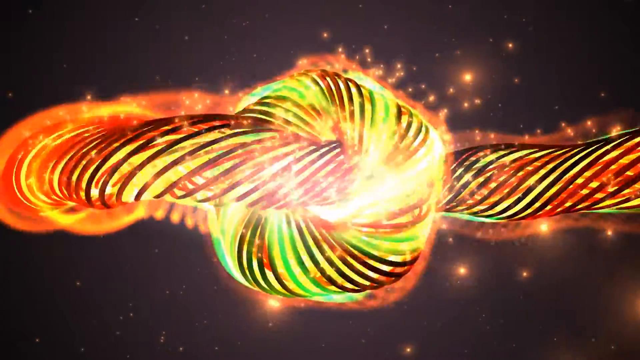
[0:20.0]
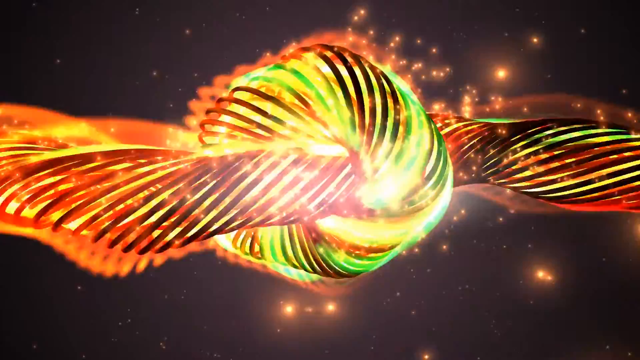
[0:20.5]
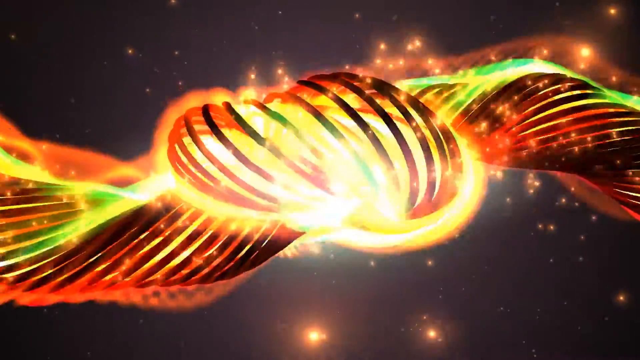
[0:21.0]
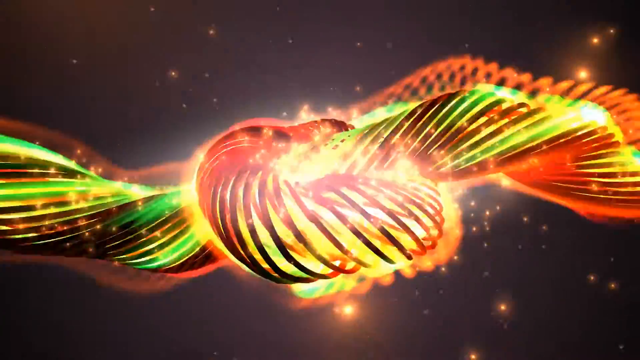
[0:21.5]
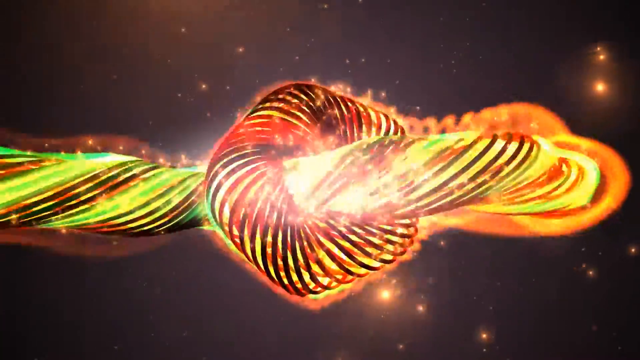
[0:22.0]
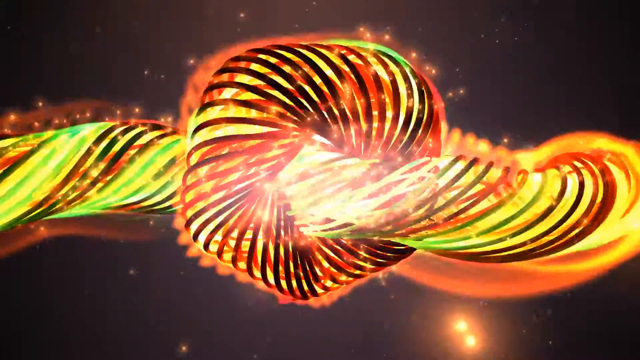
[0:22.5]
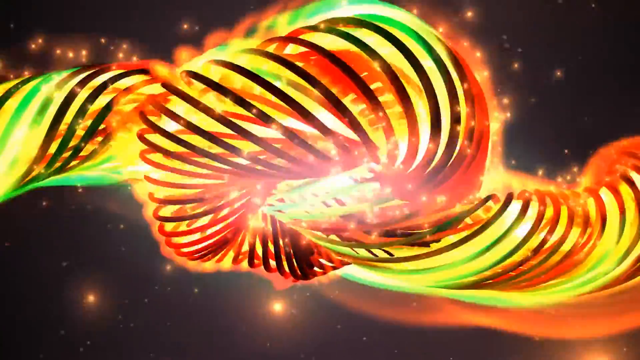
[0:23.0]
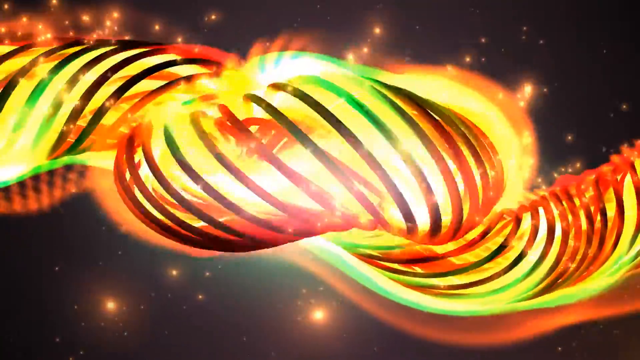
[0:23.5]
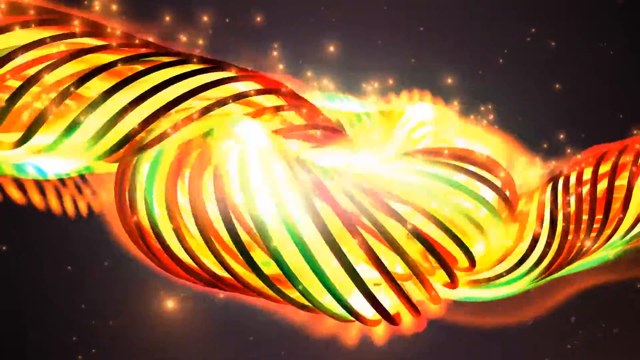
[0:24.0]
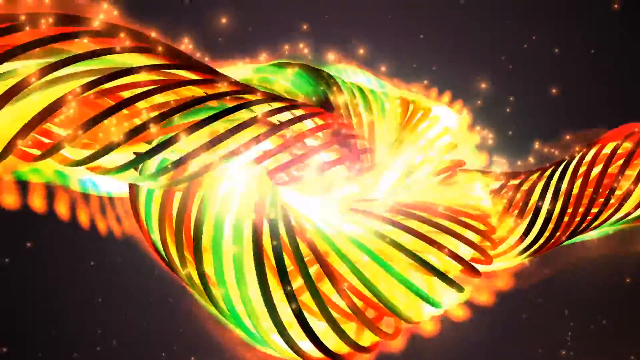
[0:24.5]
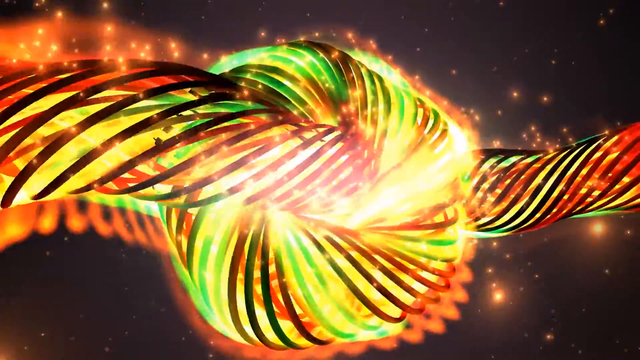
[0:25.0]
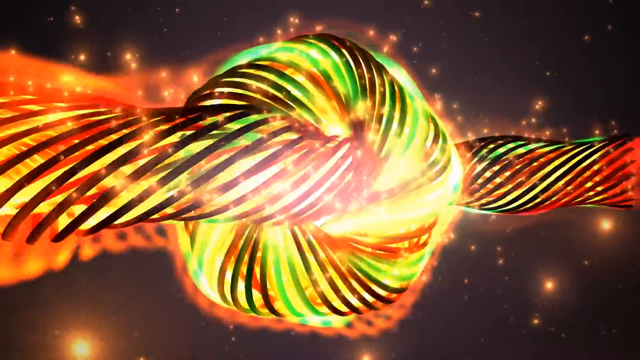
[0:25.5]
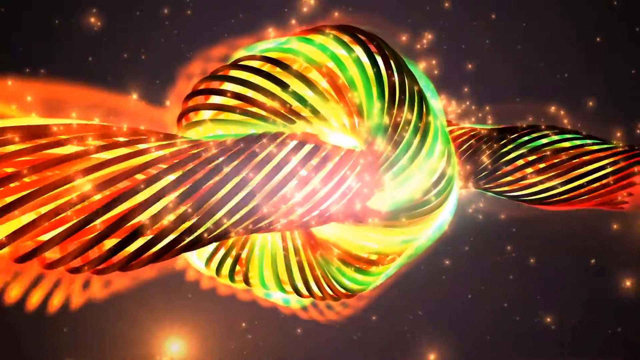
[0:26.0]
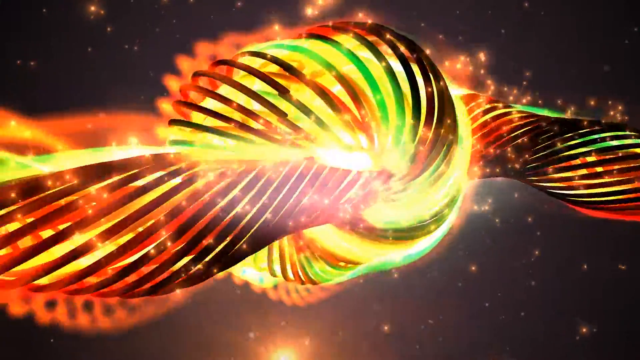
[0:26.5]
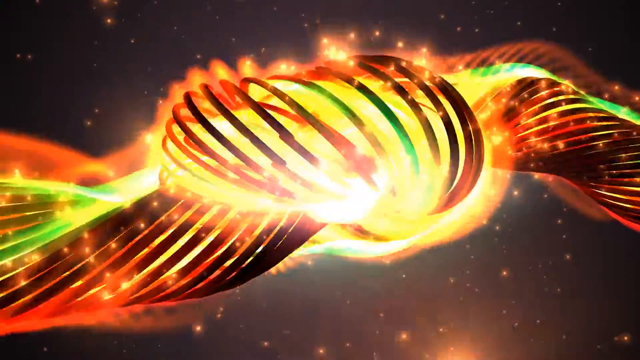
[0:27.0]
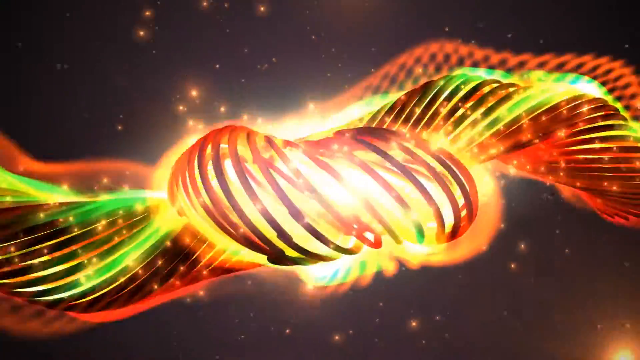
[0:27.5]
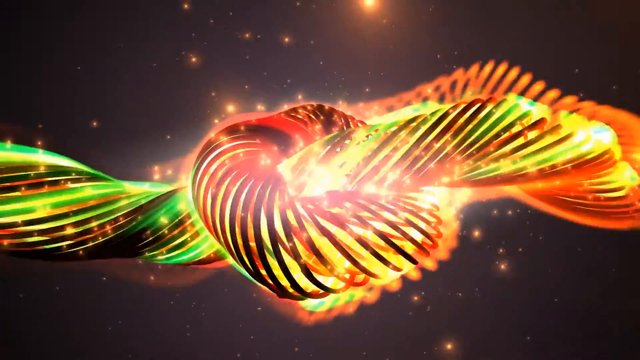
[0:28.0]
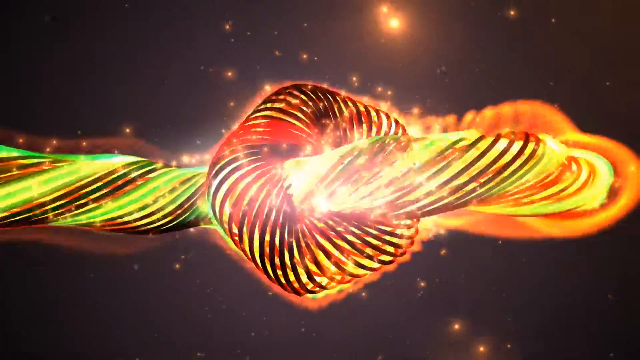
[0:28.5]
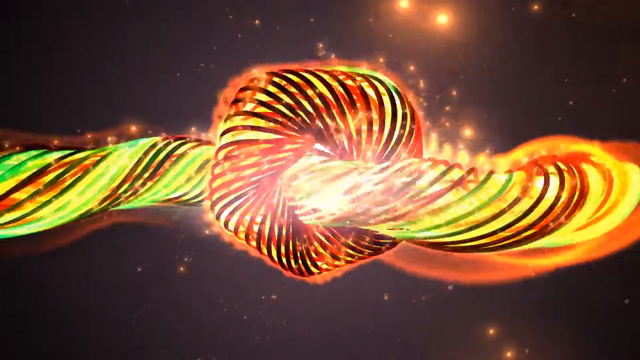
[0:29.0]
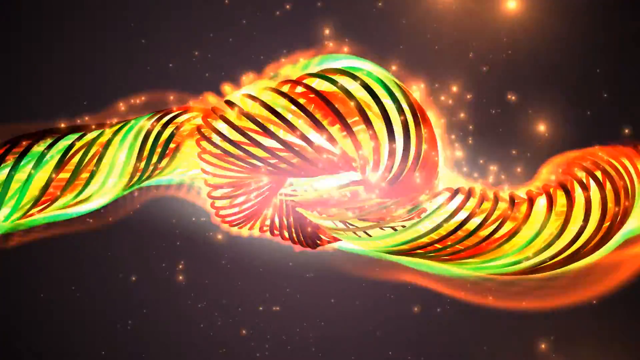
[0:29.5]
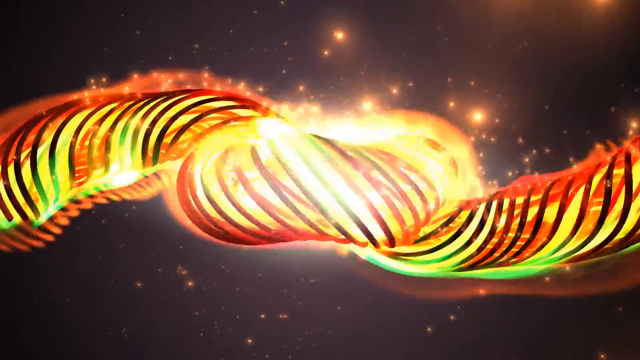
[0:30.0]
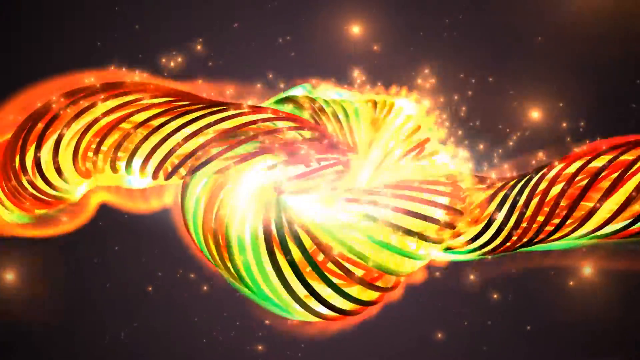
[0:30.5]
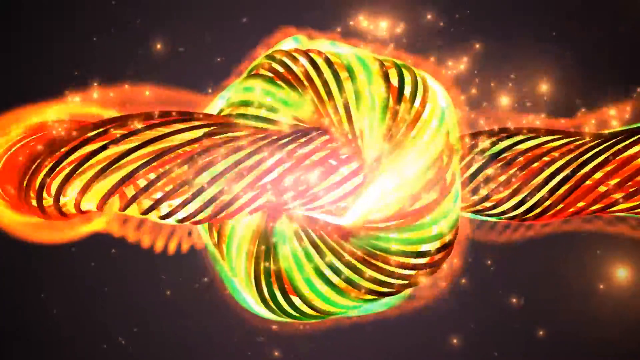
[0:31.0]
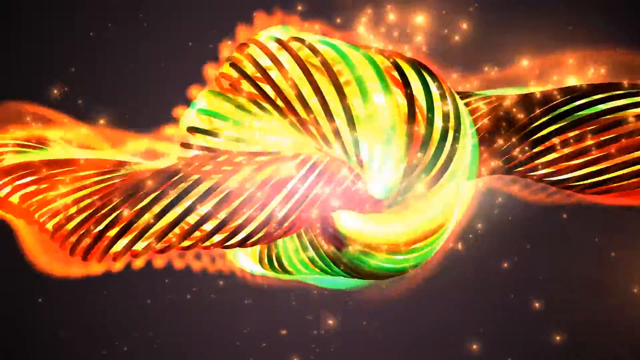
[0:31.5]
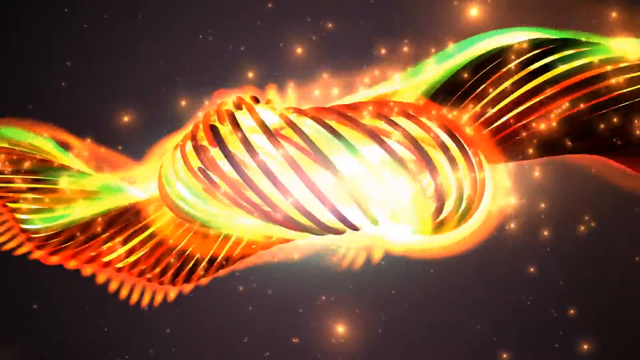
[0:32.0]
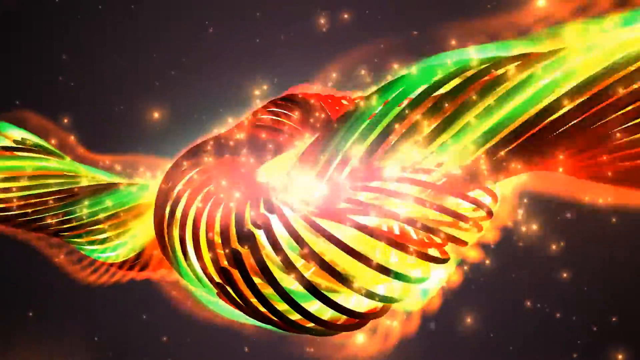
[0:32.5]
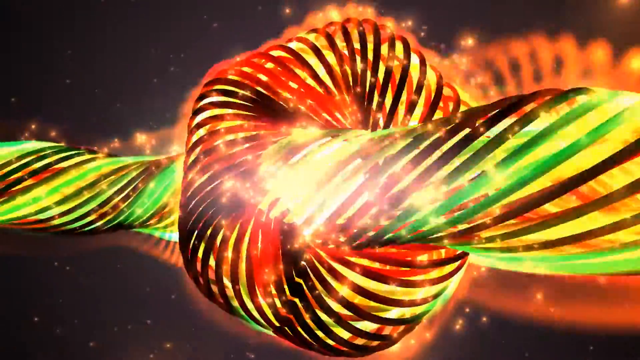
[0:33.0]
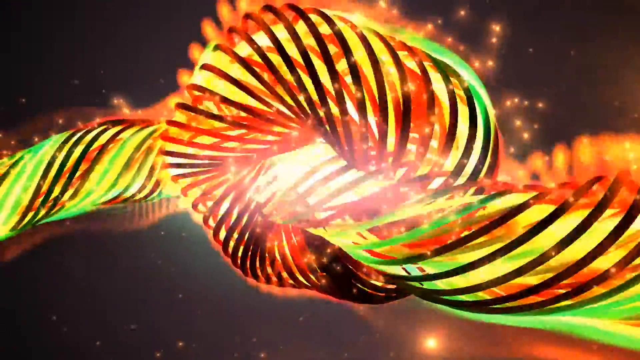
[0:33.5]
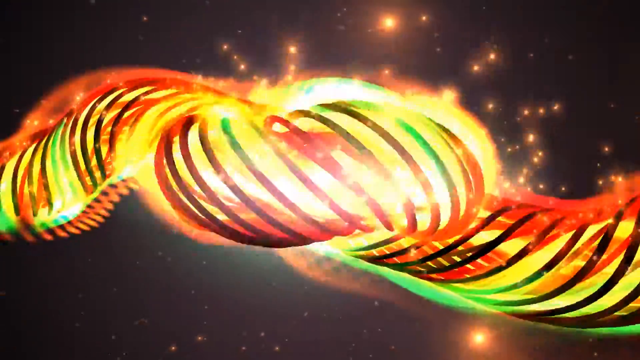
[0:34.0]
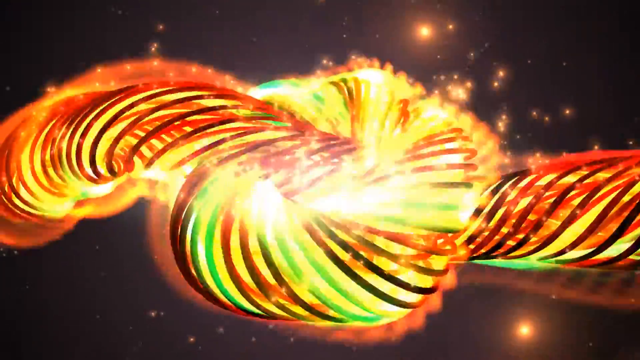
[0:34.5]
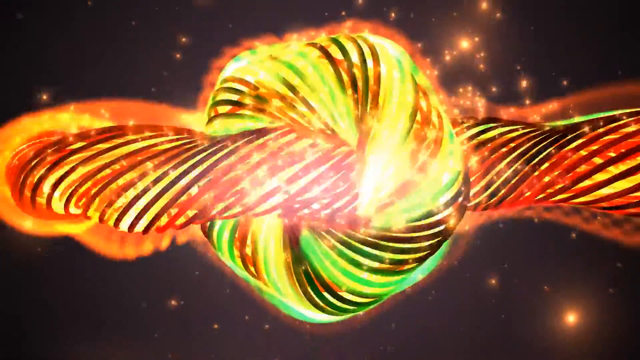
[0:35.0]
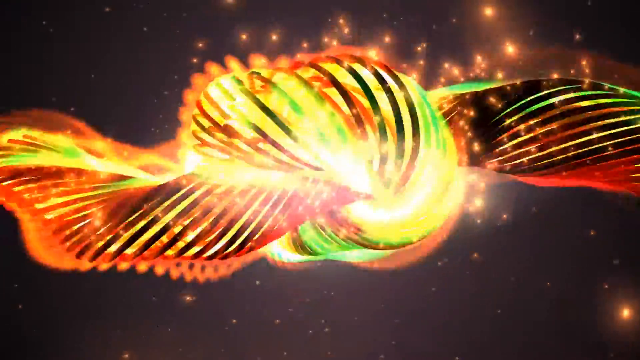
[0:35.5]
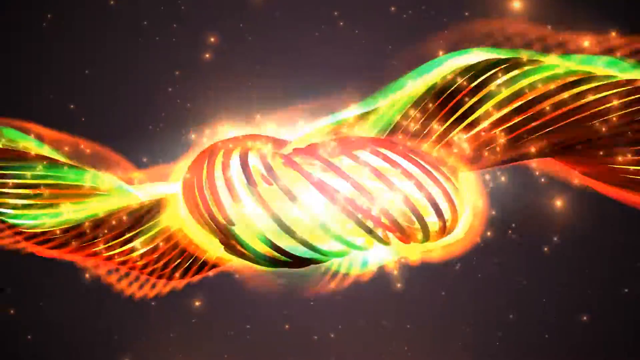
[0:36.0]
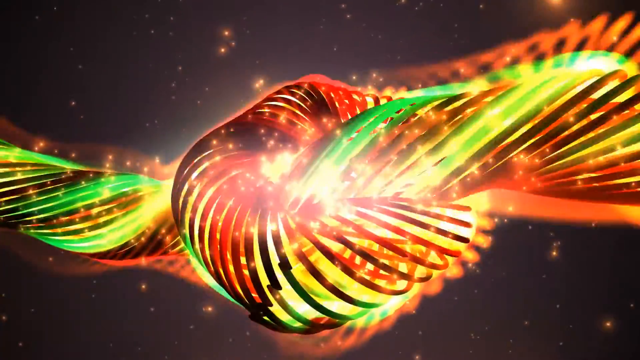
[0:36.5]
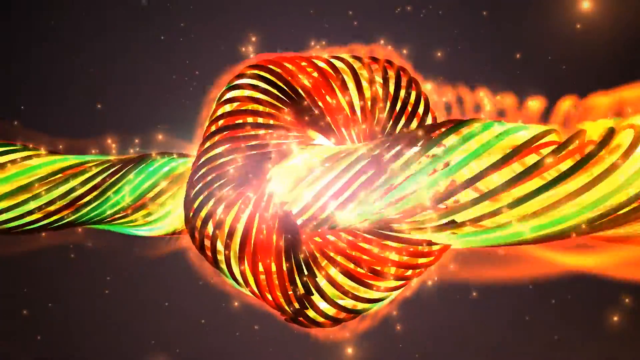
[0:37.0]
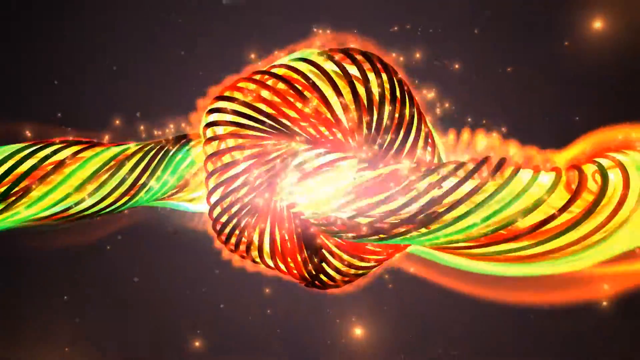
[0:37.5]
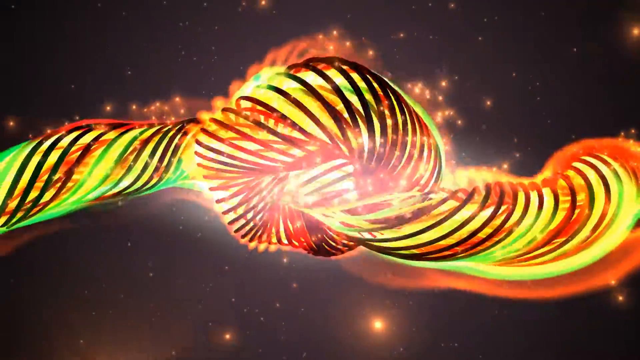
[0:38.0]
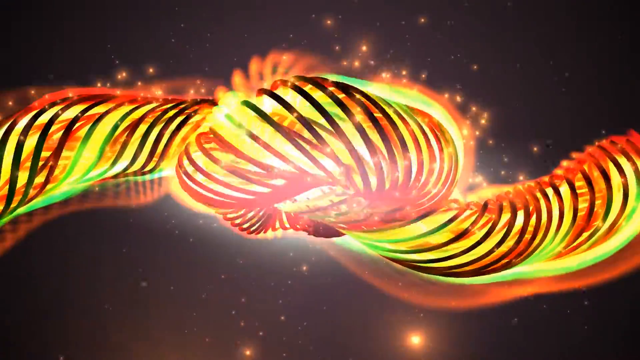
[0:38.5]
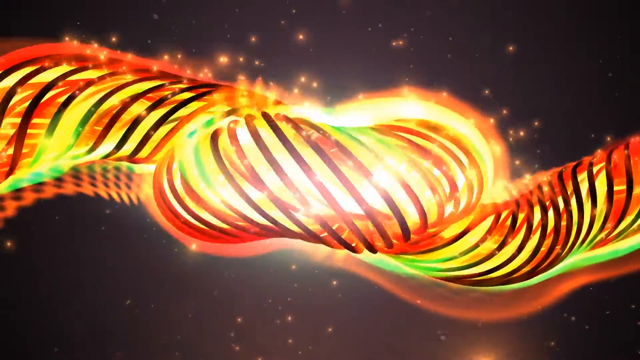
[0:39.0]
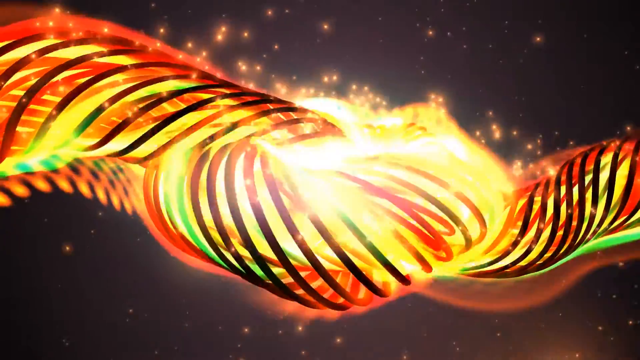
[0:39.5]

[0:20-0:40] The left side is turning down as the right side goes up, and the top of the middle piece comes toward the camera. The wires are kind of separating a little, and on the piece running left to right they are getting a little thicker, covering more of the surface. It is kind of growing greener, and more little sparks come off its pieces. The camera zooms in a little and then out; when zoomed out, the left side has the normal hue, while on the right side the coil looks like it has a hue coming off it shaped like coils, across the top of it and across the middle piece. The camera zooms in and out, then in again real close, so the central piece is very close to the camera; the coils are stretched out a little more, more of the green-yellow inside is visible, and sparks fly off more and more. It continues turning up and down; the camera zooms out while it keeps waving, then goes in really slowly and slowly moves out as the pieces keep twisting and turning. A couple of embers move across from left to right, almost like little planets.